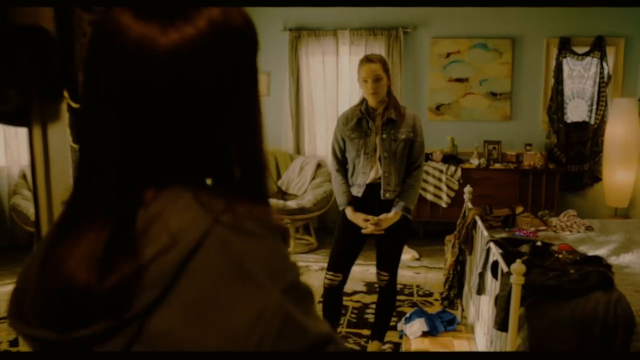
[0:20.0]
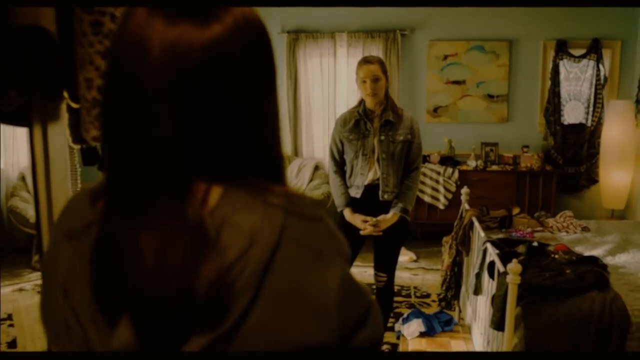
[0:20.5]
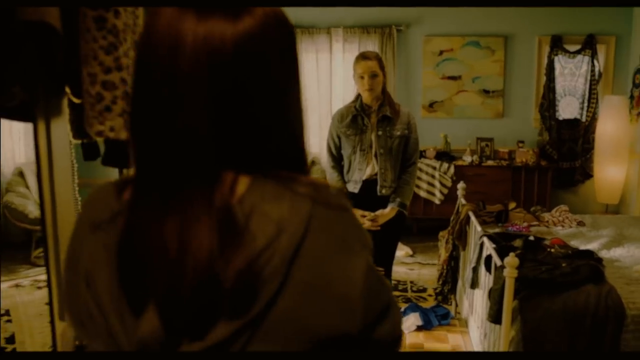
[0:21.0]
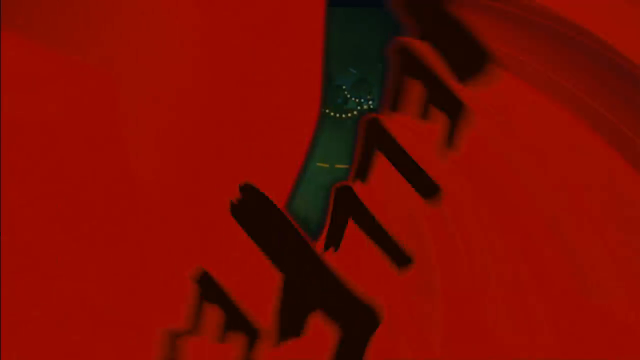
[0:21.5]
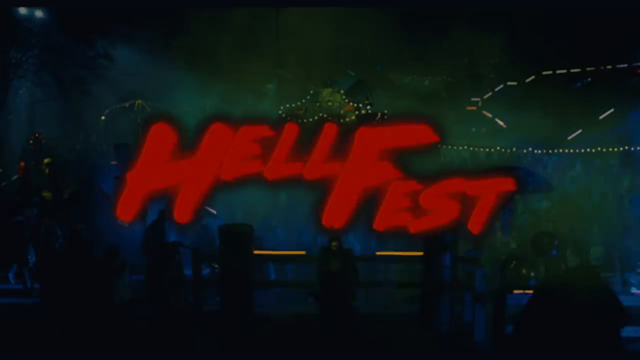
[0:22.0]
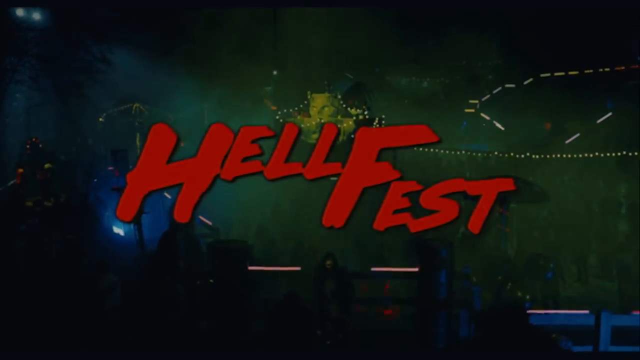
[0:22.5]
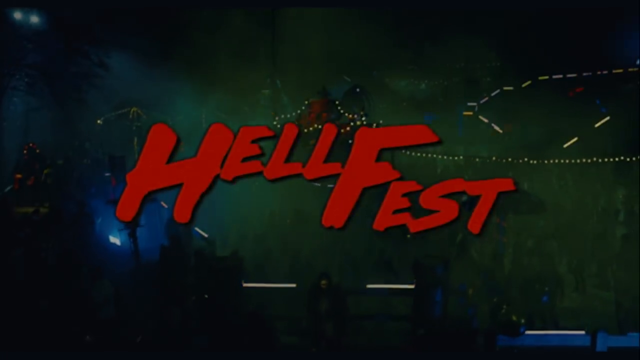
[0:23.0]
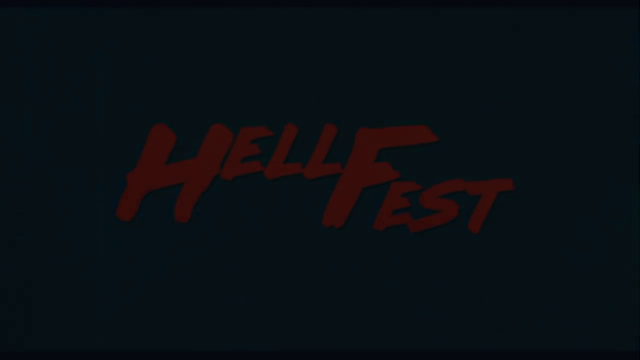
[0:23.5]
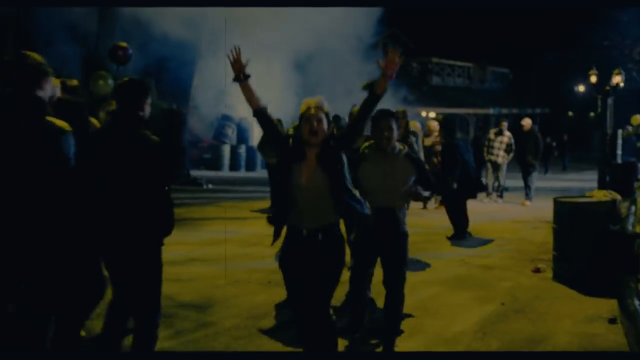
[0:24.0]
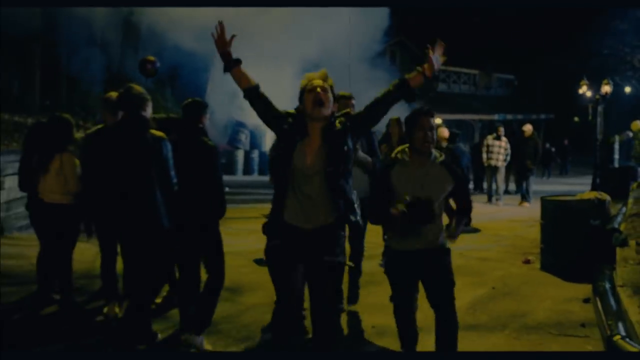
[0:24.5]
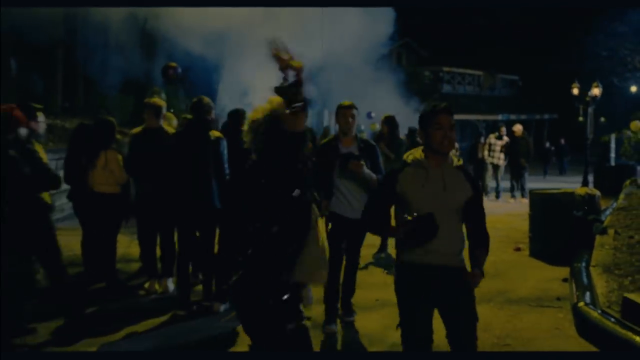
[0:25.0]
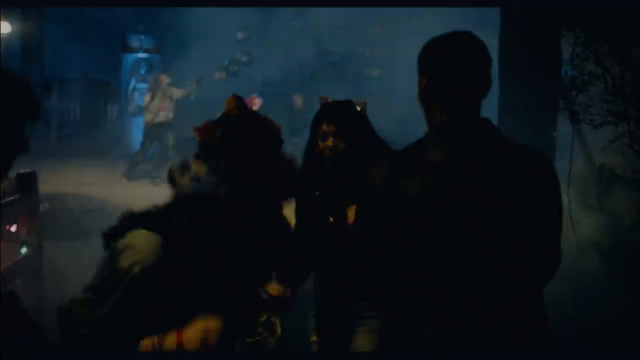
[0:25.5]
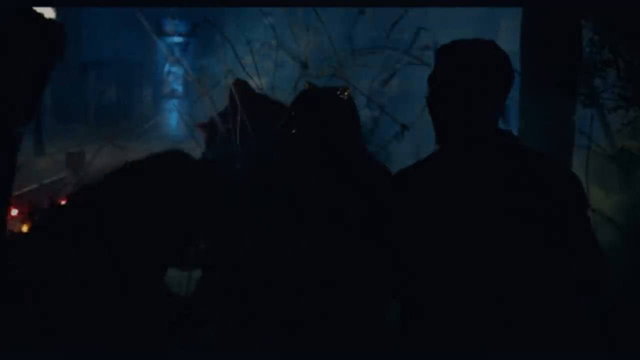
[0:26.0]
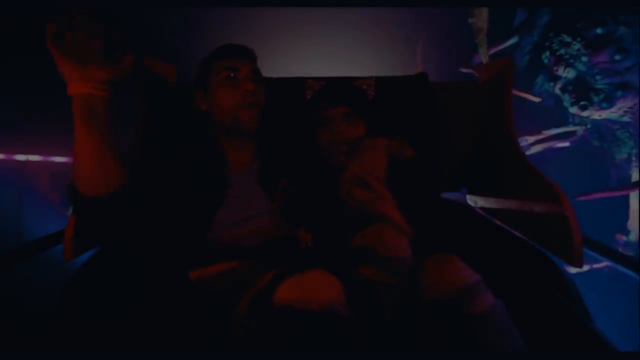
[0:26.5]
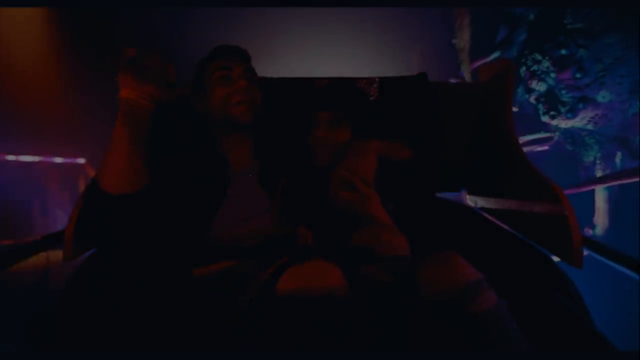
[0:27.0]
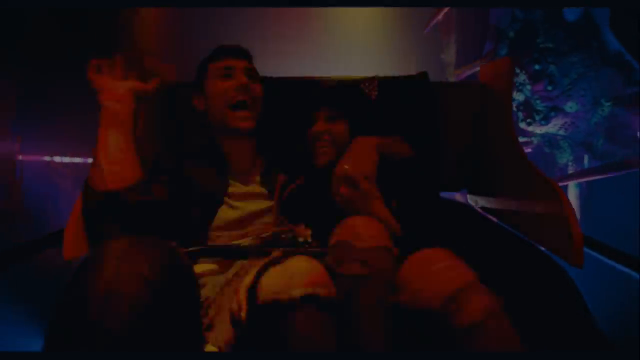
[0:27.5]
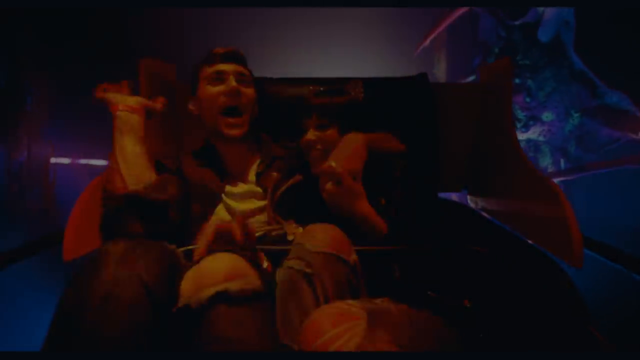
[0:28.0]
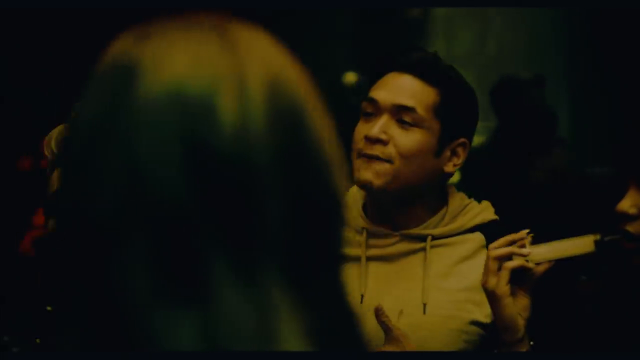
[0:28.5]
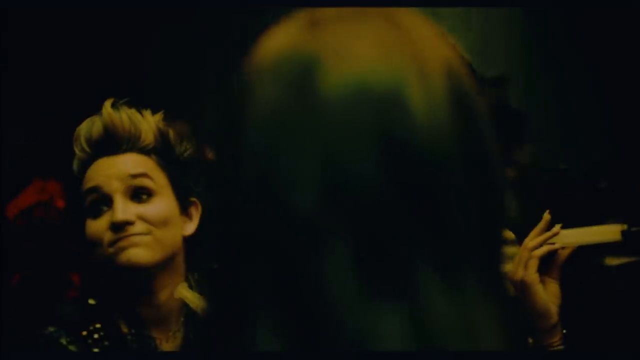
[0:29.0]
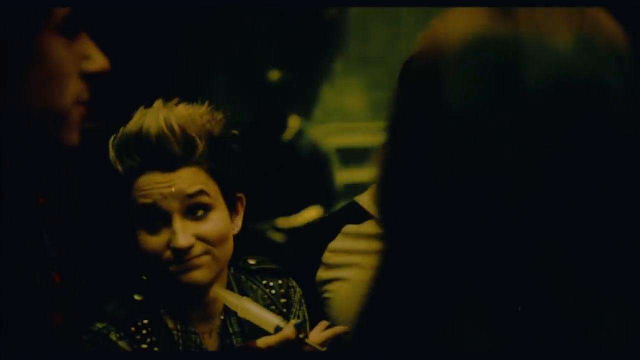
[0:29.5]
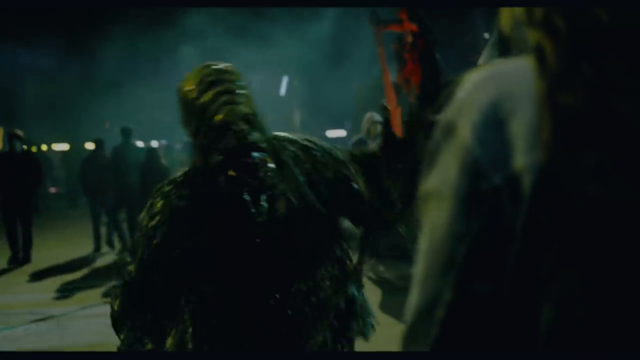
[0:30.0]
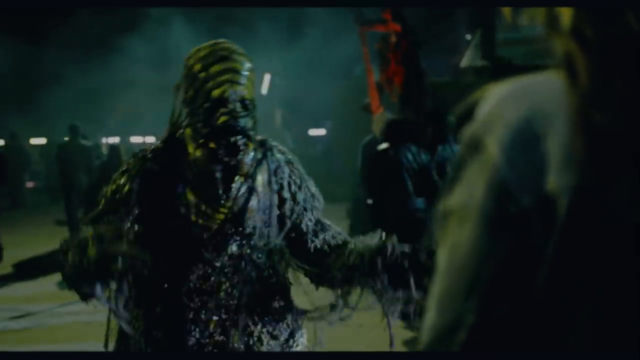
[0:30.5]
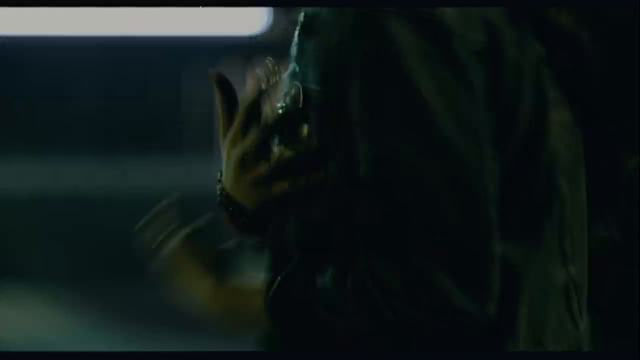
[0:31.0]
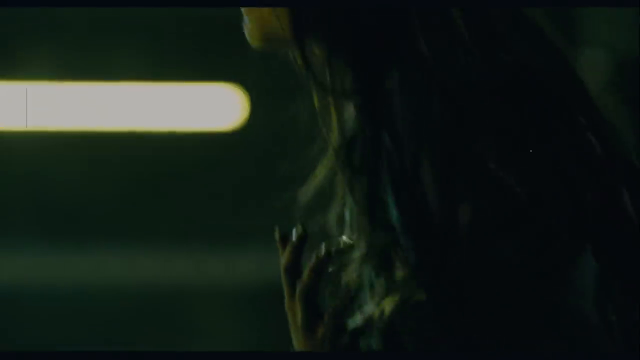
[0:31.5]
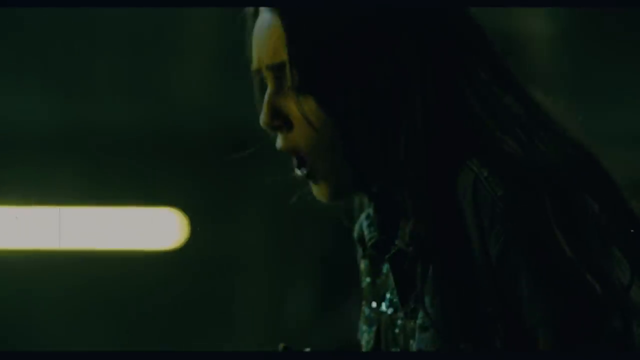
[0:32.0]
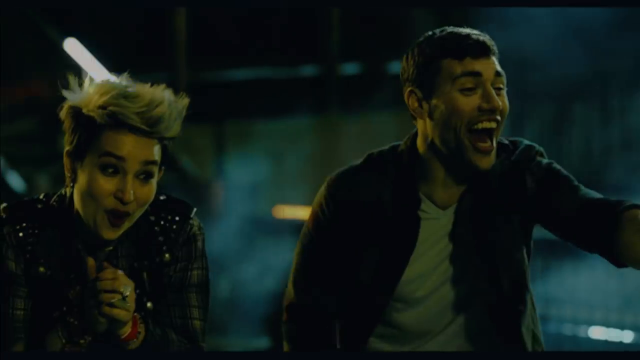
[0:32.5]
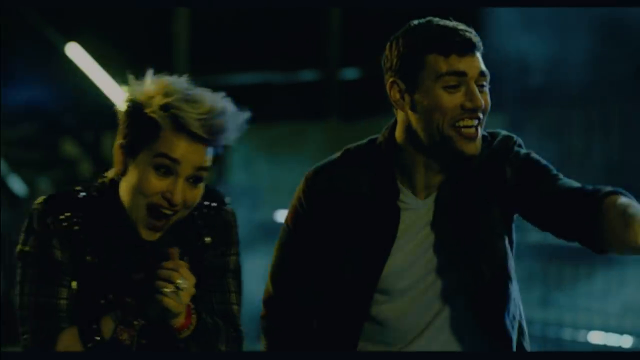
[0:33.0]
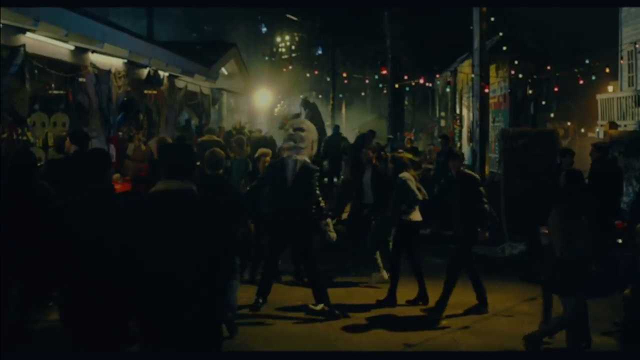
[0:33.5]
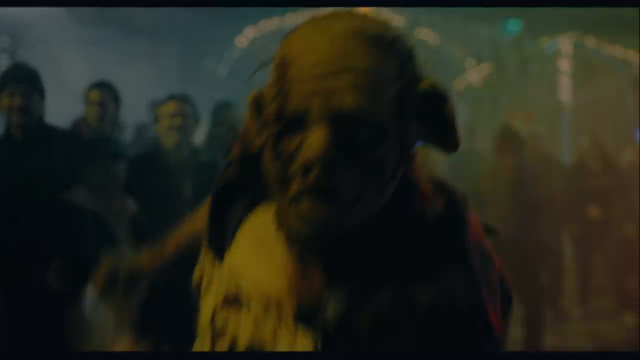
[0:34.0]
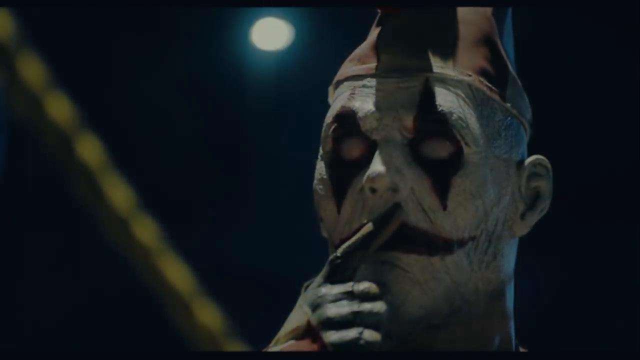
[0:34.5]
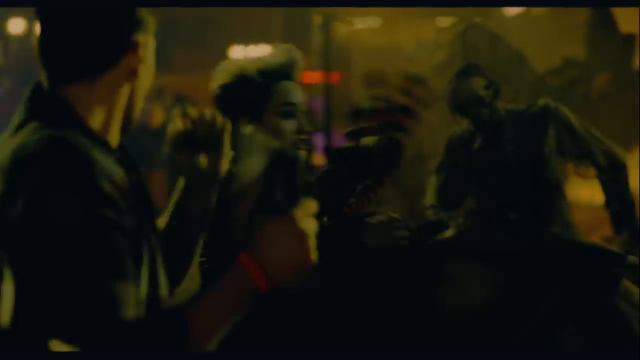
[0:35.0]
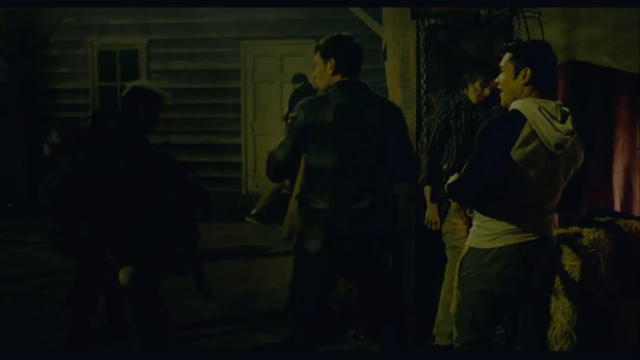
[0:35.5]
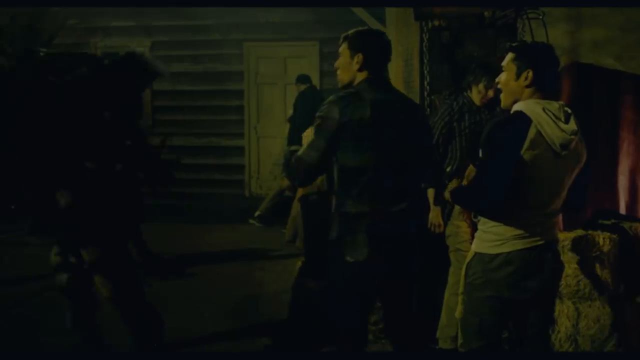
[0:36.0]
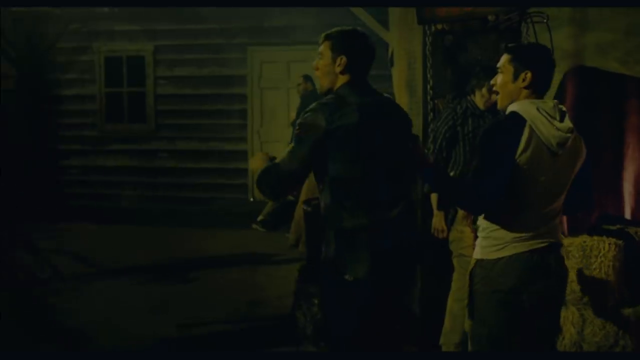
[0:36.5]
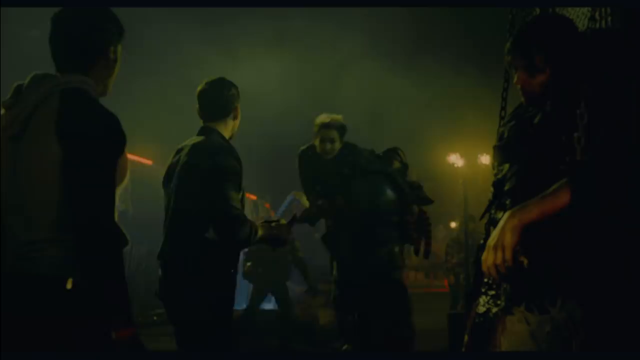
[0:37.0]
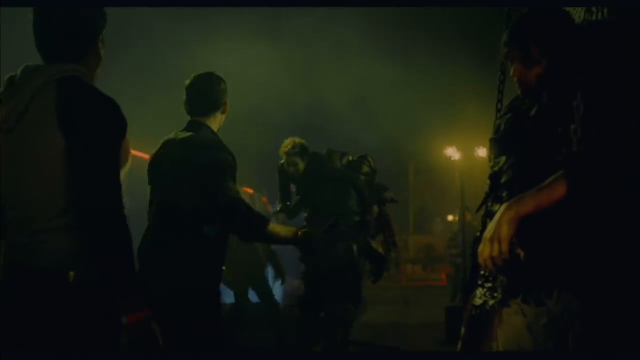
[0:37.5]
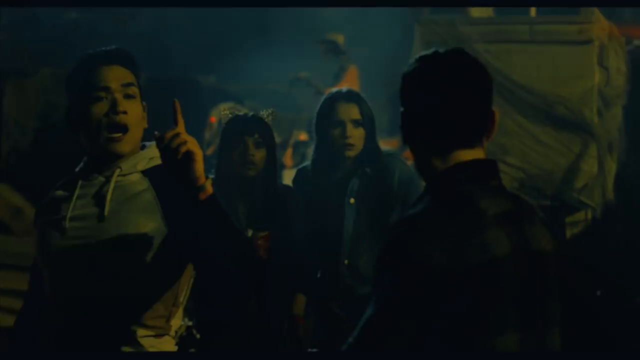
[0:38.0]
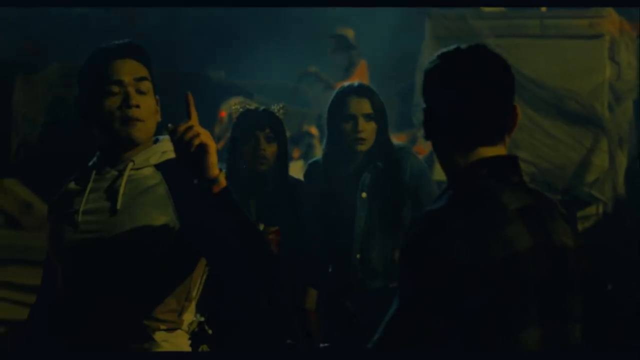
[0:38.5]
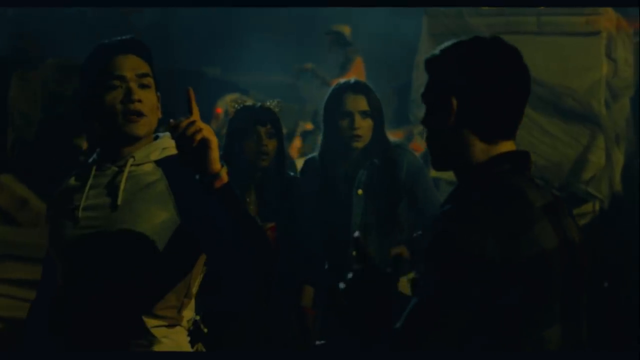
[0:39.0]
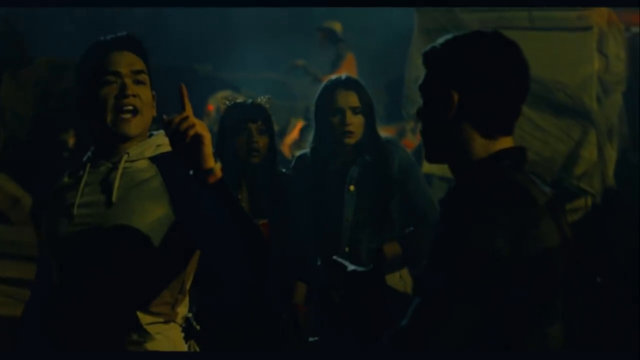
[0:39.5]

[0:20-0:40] The two girls seem to be in someone's home, and the film does not look recent, maybe from the 2000s. The camera is behind the girl in the doorway, so only the back of her head is visible. The other girl, probably about 20, wears jeans and has her arms crossed in front of her, and the two of them talk. The scene switches to what looks like maybe a concert outdoors; it is really dark and hard to see. Red text with kind of a blood effect appears reading "Hellfest". There are crowds of people, and three people are really excited: a girl has her hands up and is yelling, and they jump all around. They are then shown on a ride that looks like it has spikes and other things coming out of it, and afterward all of them are kind of in a circle talking to each other. Something scary appears to be going on: a guy dressed in a costume looks like he spits all over a girl, scary figures pop out, and a girl is dragged away on the back of one of them.